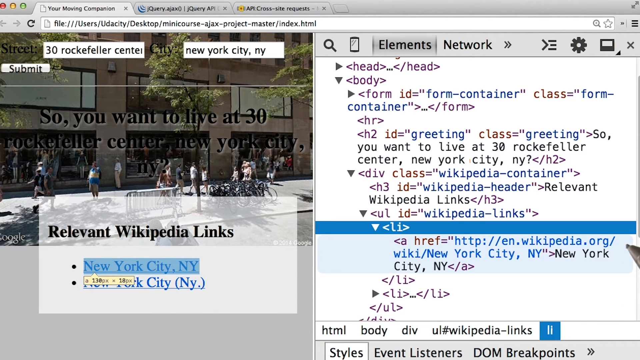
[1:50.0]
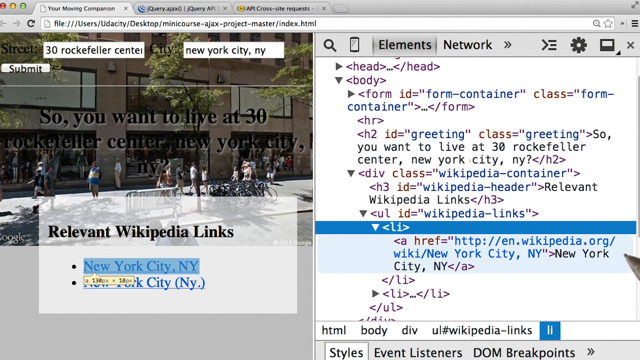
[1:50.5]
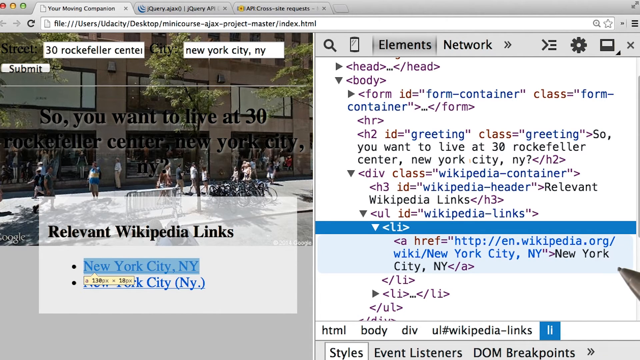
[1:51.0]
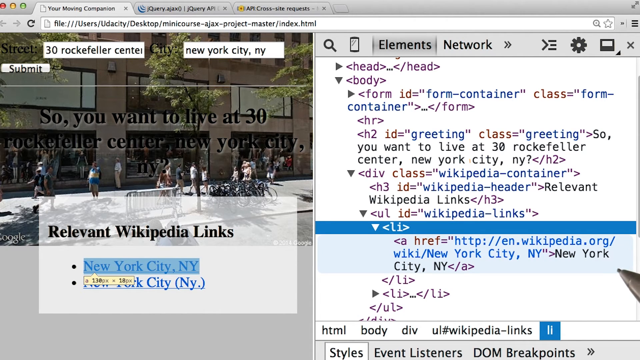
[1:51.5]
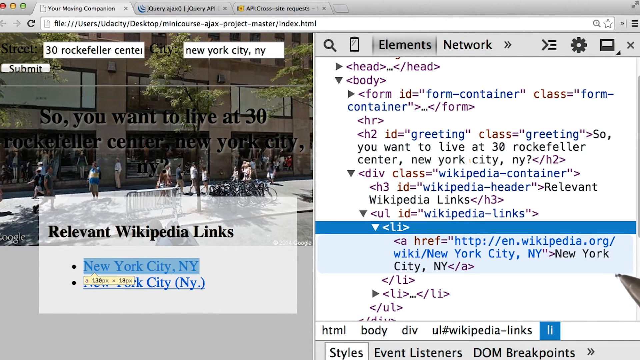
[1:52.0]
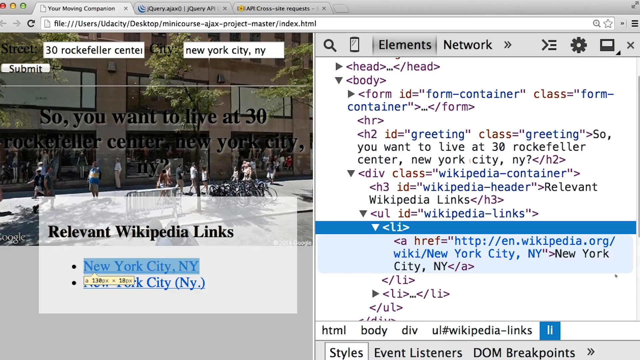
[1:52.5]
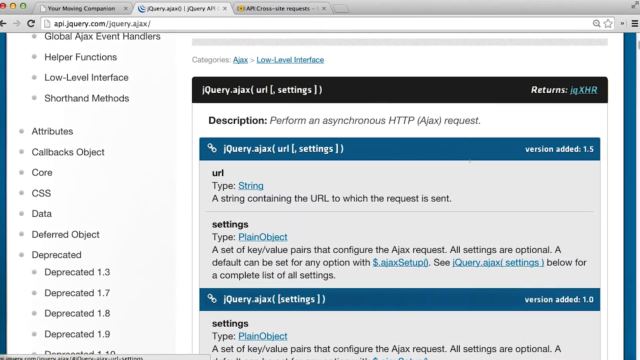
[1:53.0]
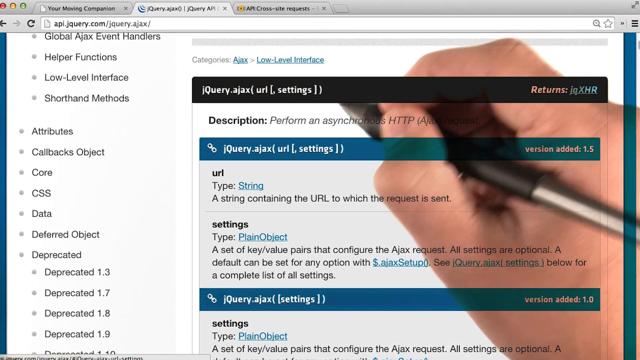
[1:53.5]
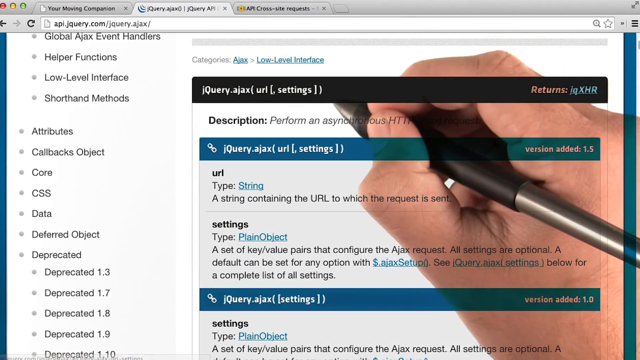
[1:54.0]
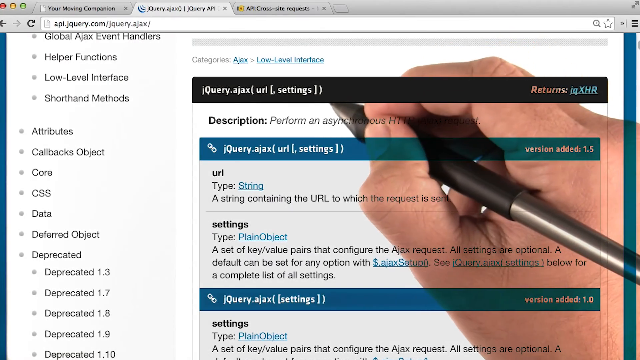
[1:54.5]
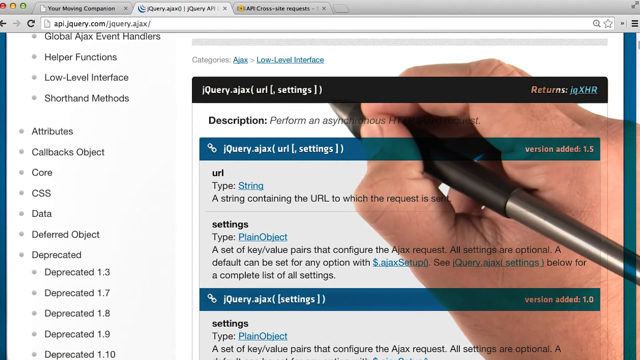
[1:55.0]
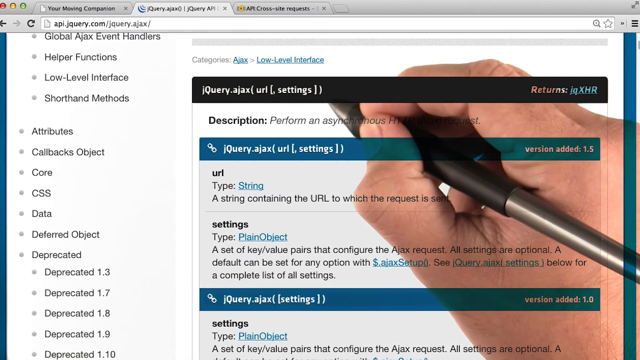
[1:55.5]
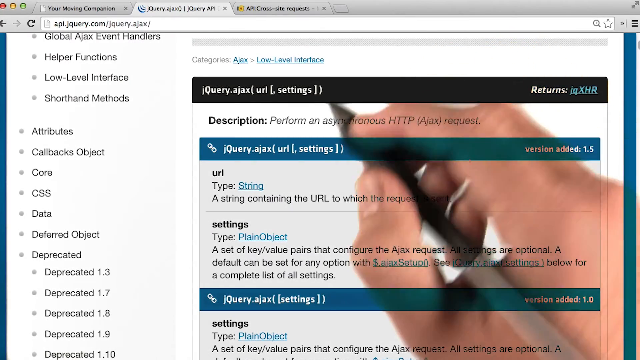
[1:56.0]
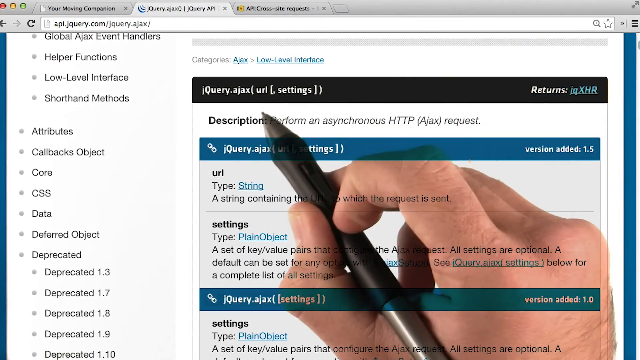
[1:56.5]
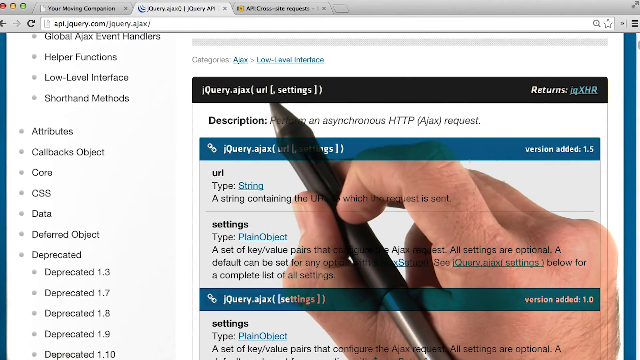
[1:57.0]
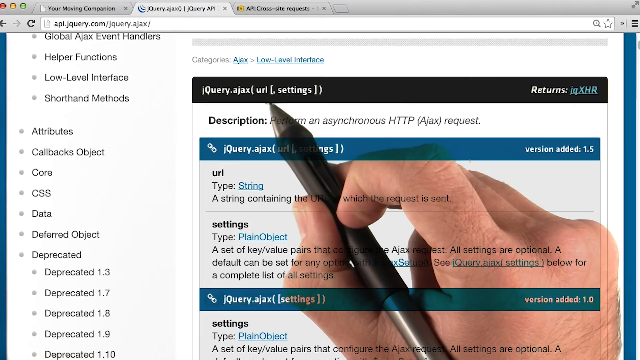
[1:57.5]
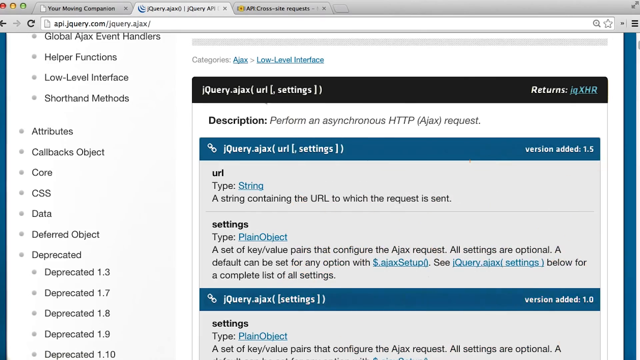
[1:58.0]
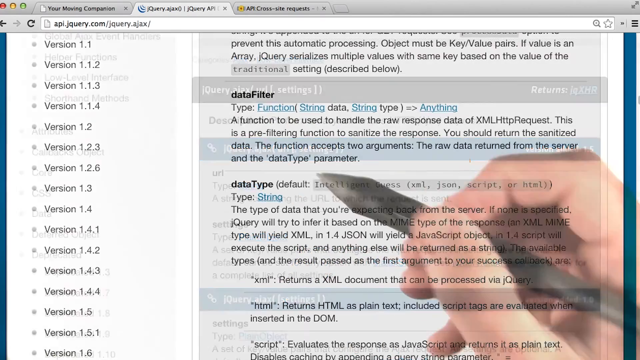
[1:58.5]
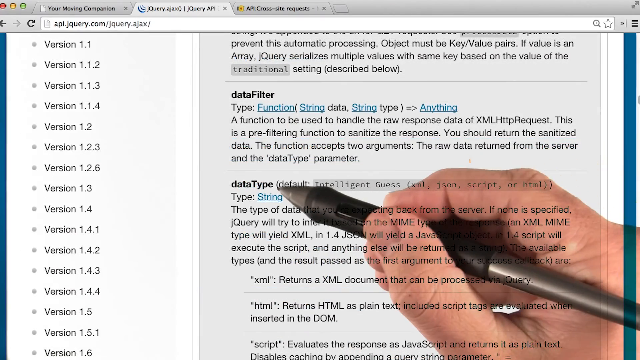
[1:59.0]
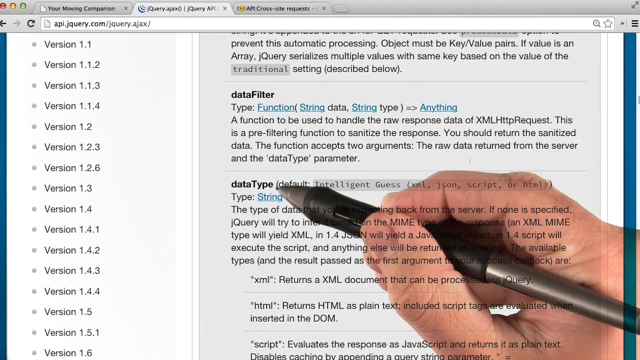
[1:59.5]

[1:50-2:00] The screen is divided into two. On the left is a picture of the 30 Rockefeller Center building, with text reading "so you want to live at 30 Rockefeller in New York," people walking by, and two Wikipedia links to New York. On the right is some information, with one link highlighted in blue. A pencil makes a random dot on the page. The page turns, and the person holds the pen or pencil in their right hand, which looks like a man's hand based on its size. A page reads "jQuery AJAX," and the person keeps making random dots. Then a page with some words appears, and the hand comes in near "data type" and makes a dot.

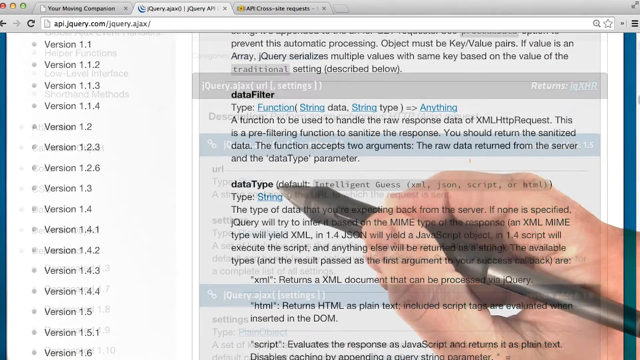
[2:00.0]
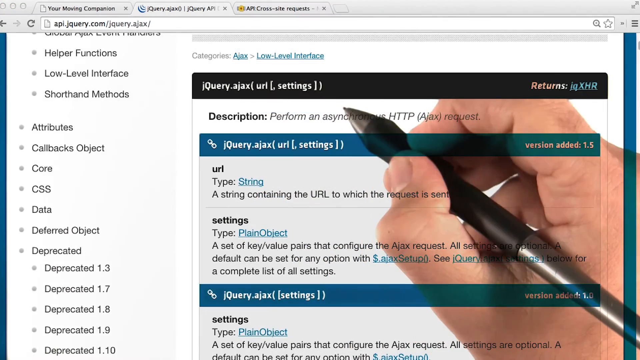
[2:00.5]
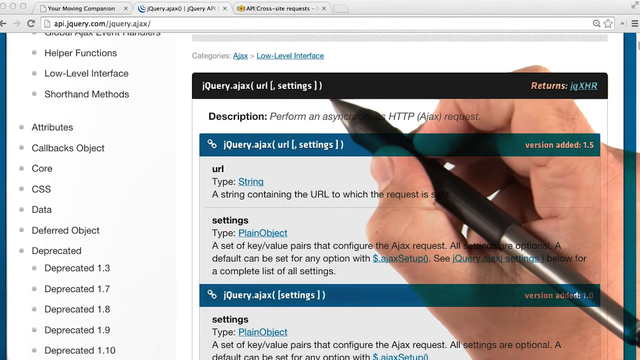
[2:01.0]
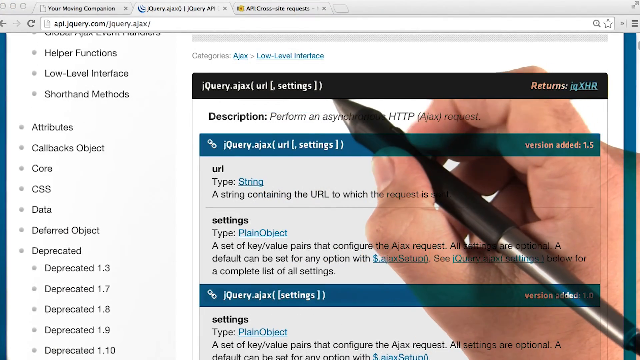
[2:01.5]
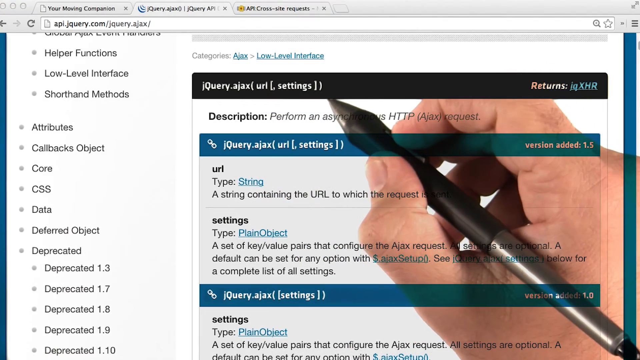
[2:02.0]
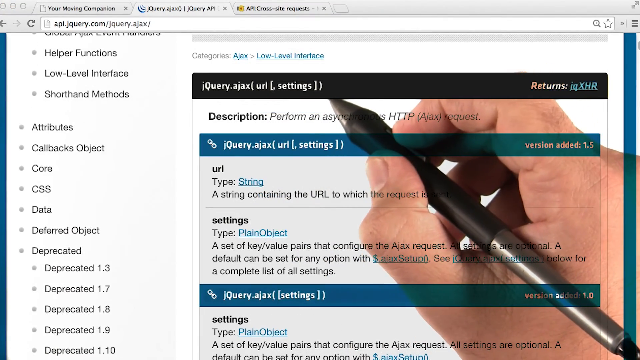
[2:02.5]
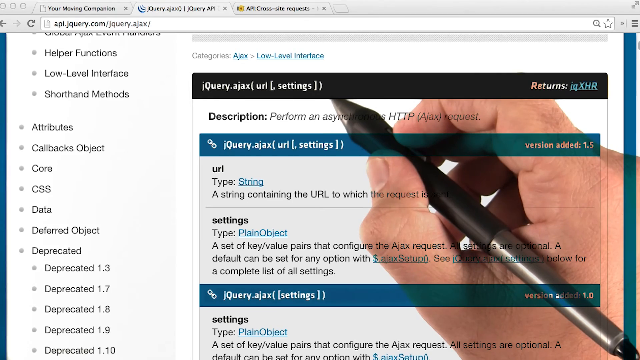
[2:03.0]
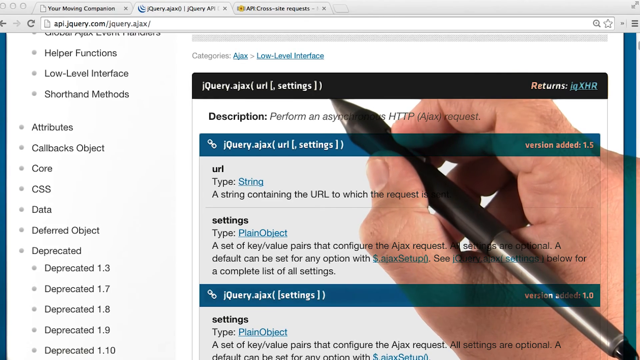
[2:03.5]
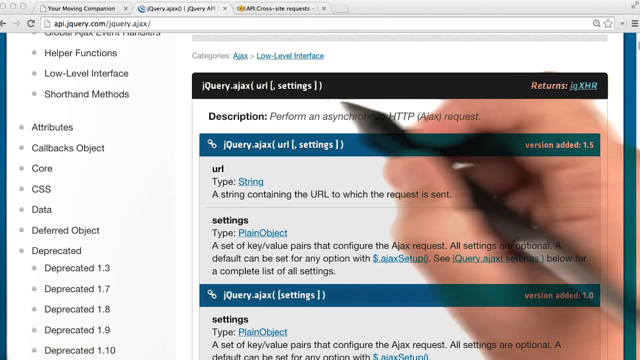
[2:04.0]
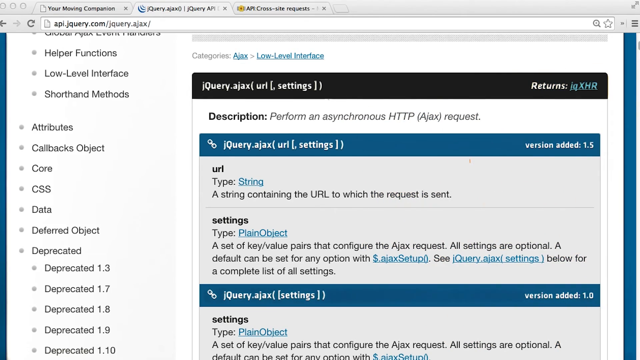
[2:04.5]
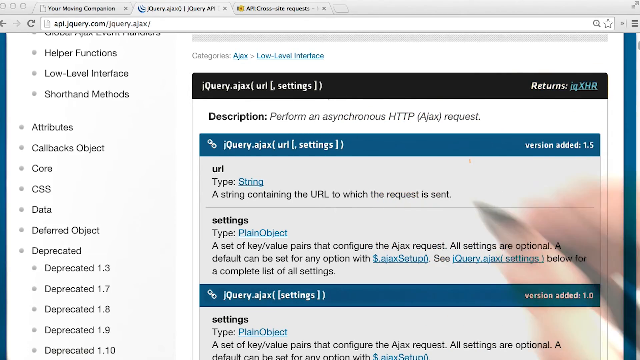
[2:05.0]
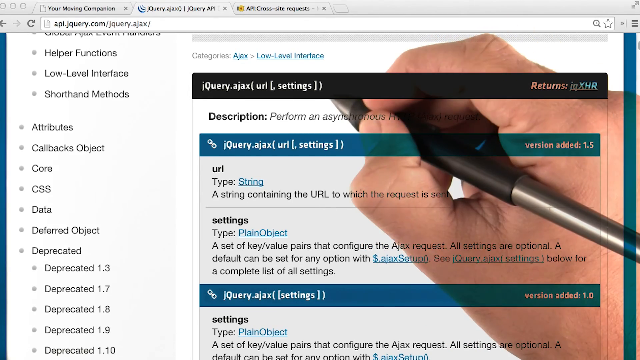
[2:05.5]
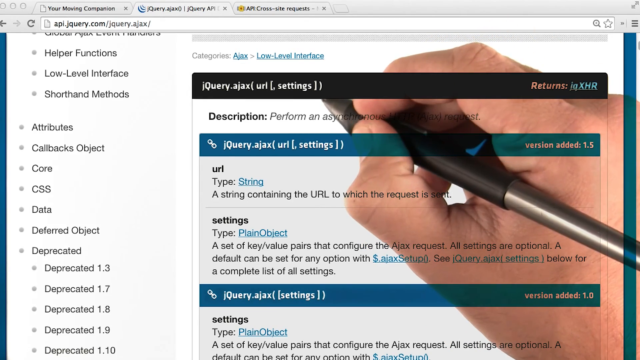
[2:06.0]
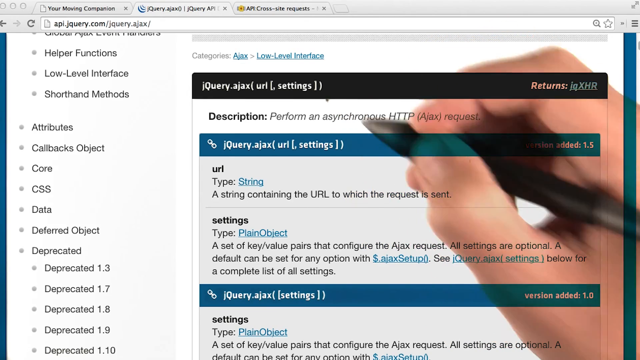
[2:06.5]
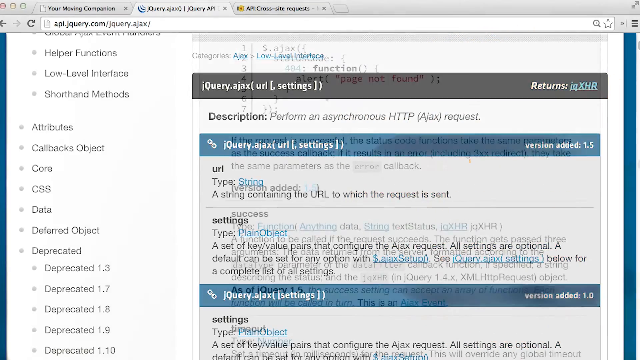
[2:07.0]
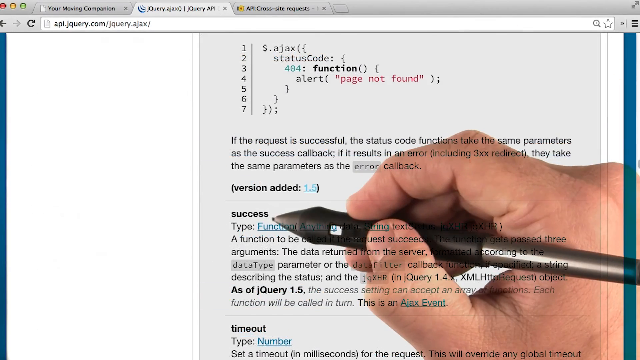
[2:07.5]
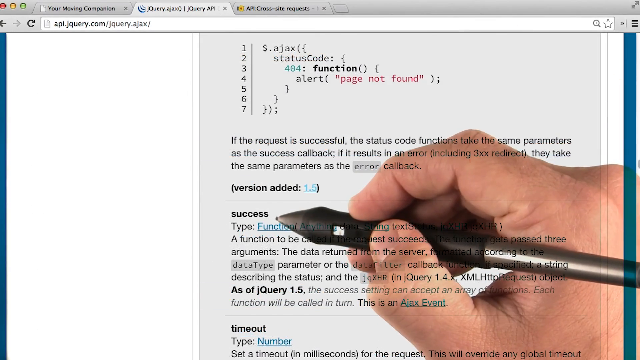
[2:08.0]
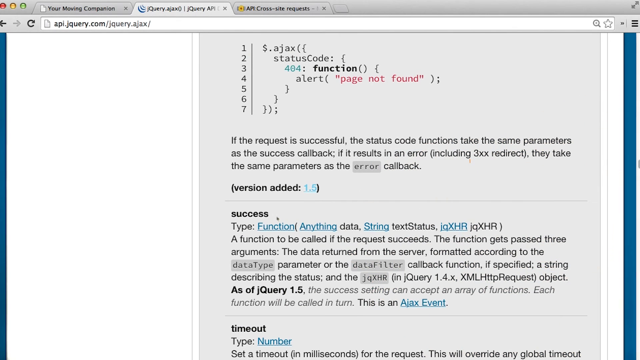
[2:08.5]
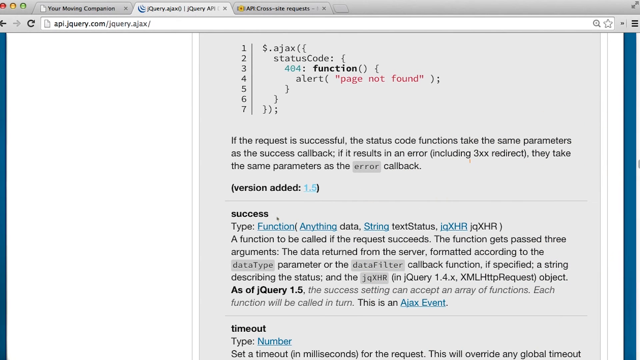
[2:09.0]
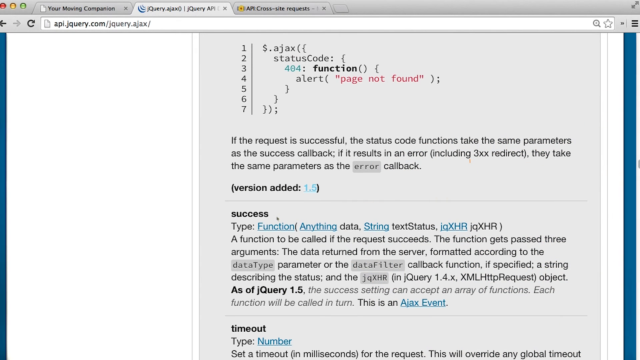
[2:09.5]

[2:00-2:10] Information from Wikipedia is on the screen, showing "settings," "URL" and "description." A person's whole hand, holding a pen, comes in and makes random dots on the page. The page turns to an informational page with the word "success" and a short write-up, and the hand, which appears to be a man's because of its size, comes in and makes random dots all over, not near any important information. A dot is even placed on a black border, where it does not show. The dots continue as the pages turn.